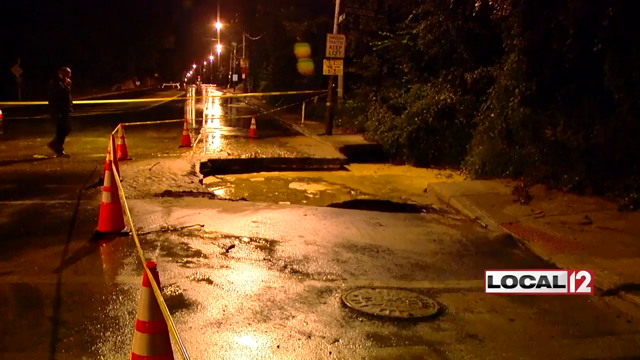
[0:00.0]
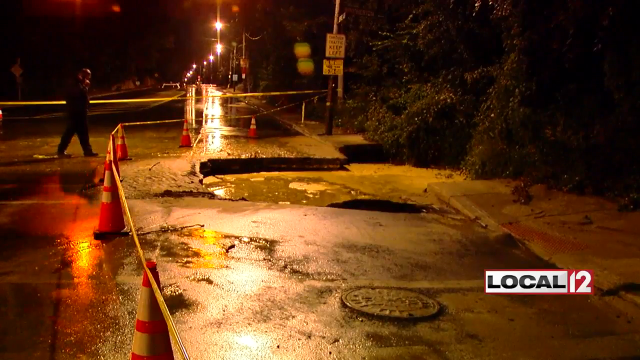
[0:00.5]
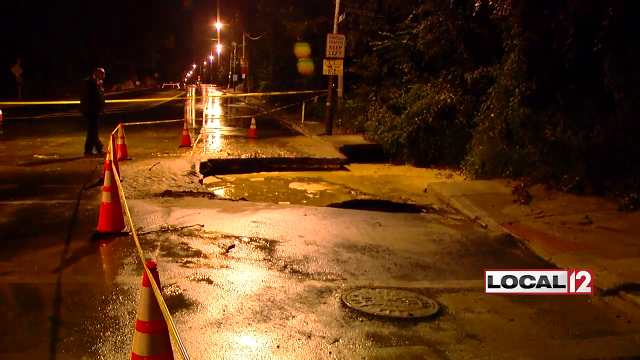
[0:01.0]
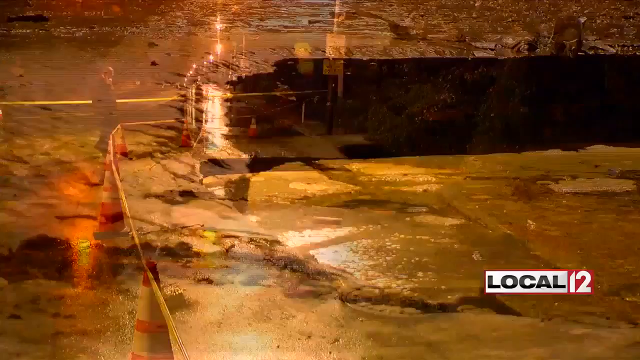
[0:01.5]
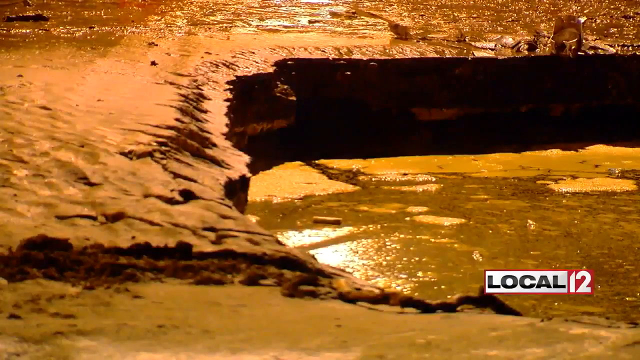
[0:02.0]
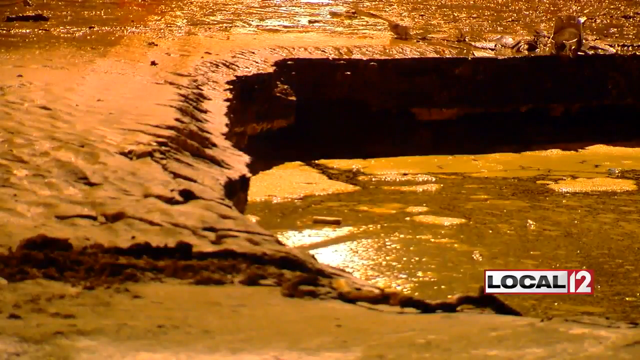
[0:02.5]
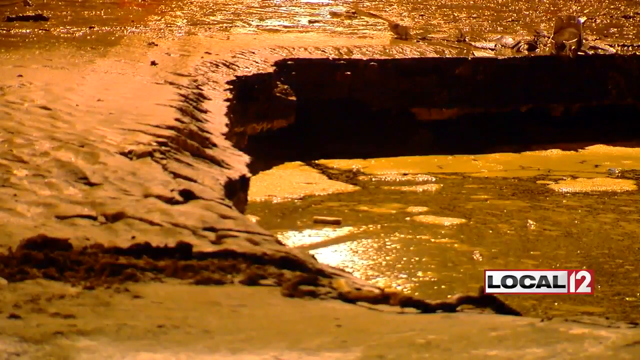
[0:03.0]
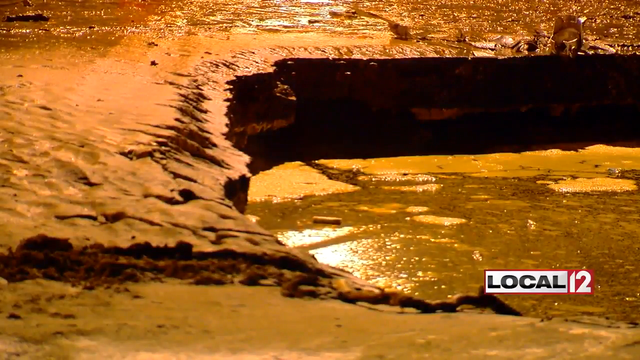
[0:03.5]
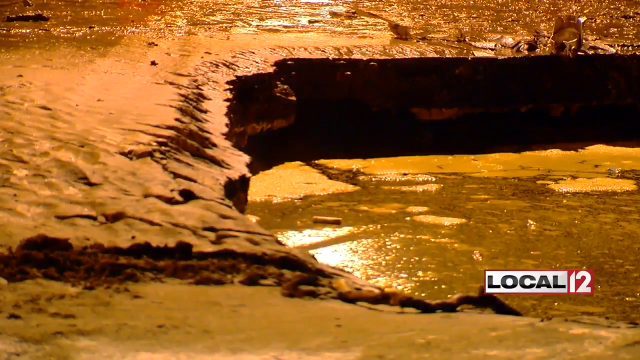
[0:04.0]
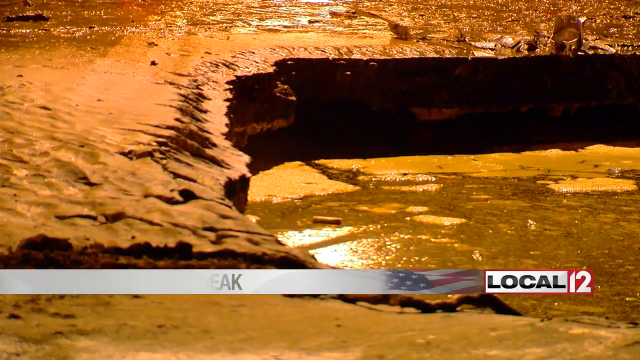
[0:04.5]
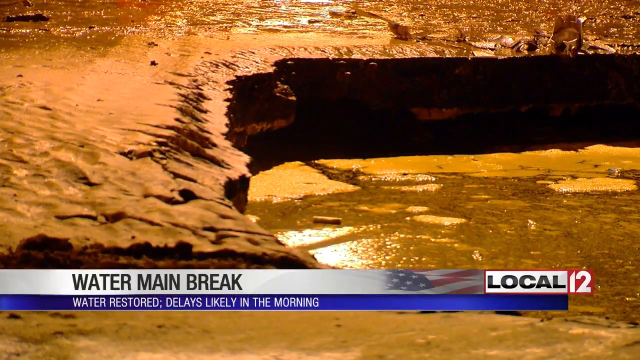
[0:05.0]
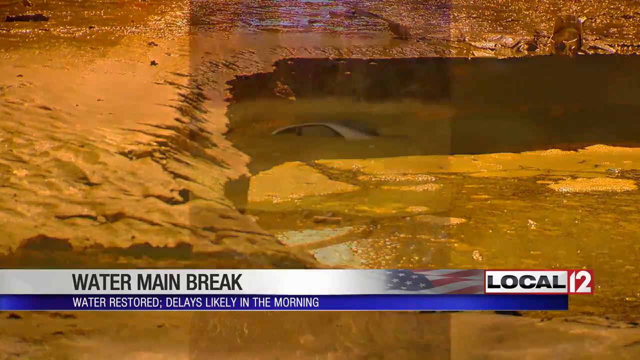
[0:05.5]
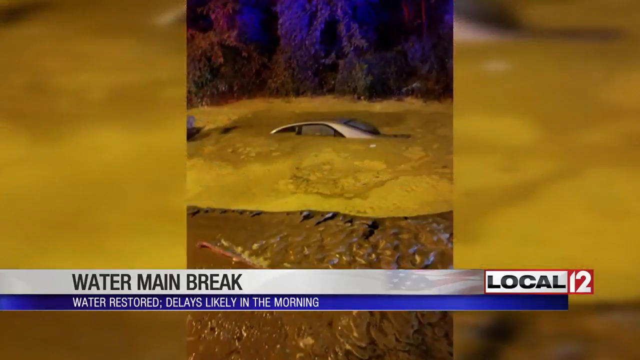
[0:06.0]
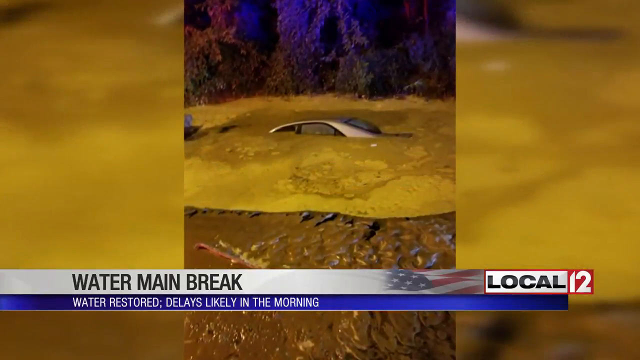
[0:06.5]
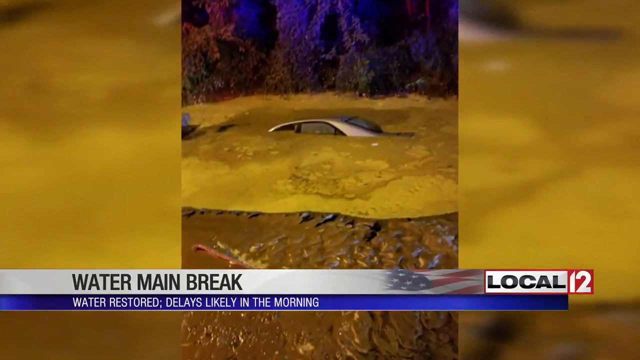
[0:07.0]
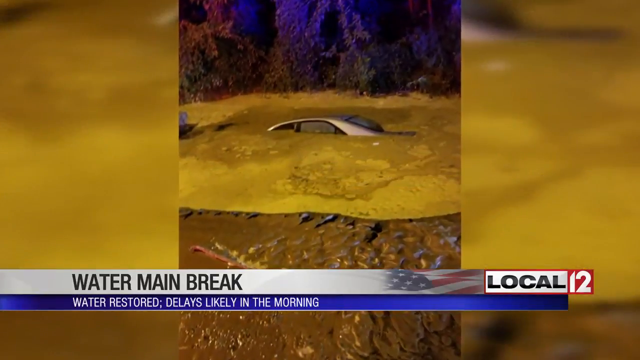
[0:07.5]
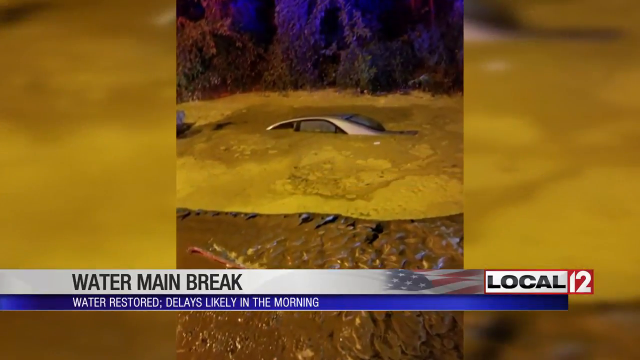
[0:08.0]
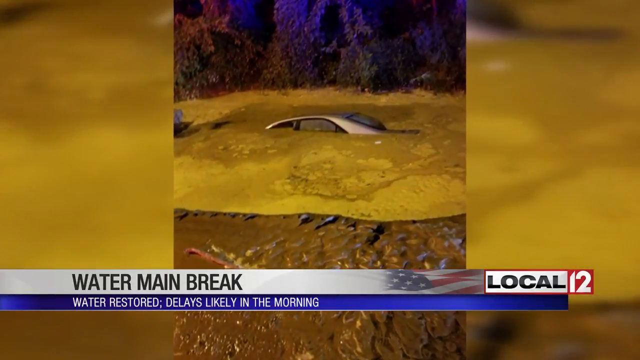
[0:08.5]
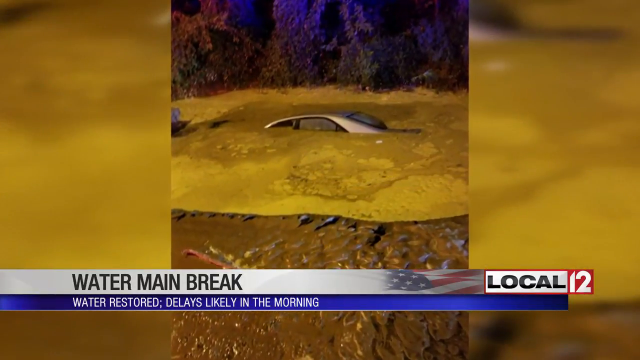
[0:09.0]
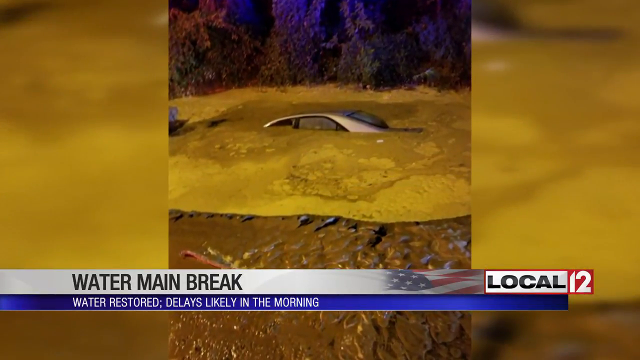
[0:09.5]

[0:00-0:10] The video opens on an outdoor setting where it looks like it has been raining. On the left-hand side there is a lot of shiny water on the ground. Towards the back of the central section, streetlights are lined up. In the top left, a man is stood up; he is wearing all black and seems to be holding a phone to his ear with his right hand. Next comes a scene where water is congregating on the right-hand side of the screen, flowing towards the bottom right corner. A banner pops up along the bottom of the screen, running from the left side to the right, reading "Water main breaks" and "delays likely in the morning". An image shows a car completely sunken under the water except for the very top of its roof.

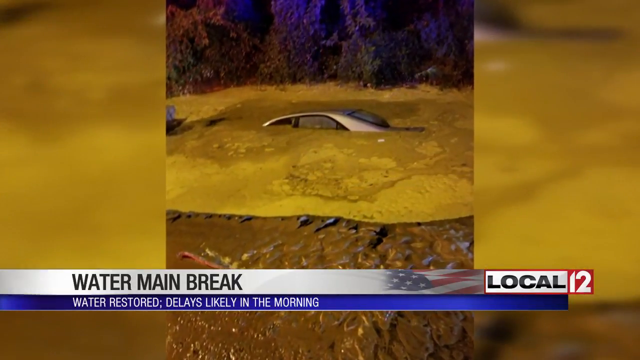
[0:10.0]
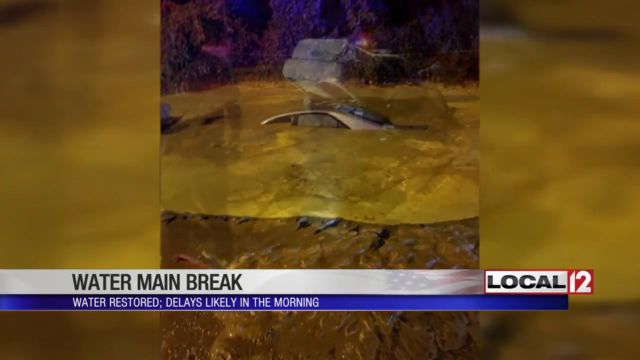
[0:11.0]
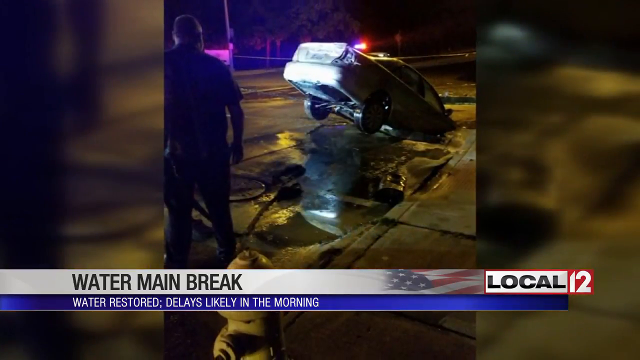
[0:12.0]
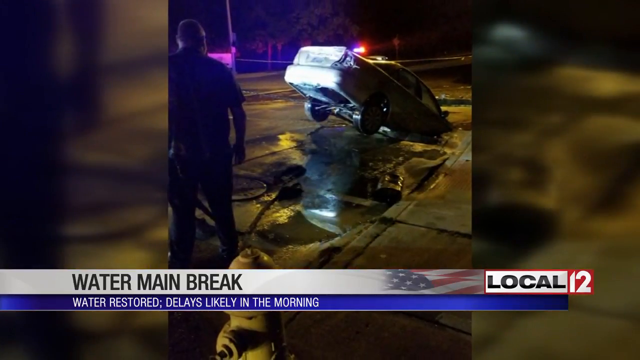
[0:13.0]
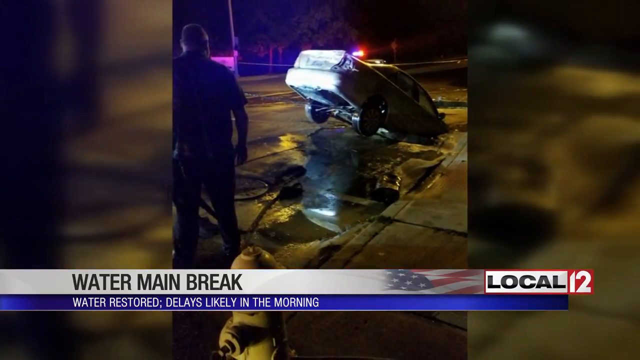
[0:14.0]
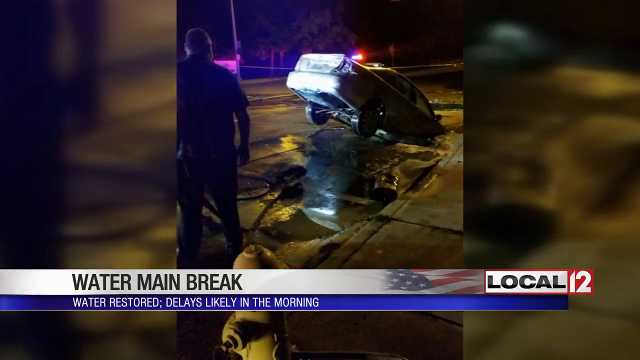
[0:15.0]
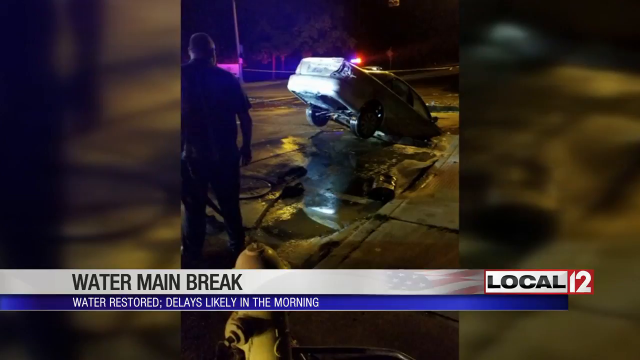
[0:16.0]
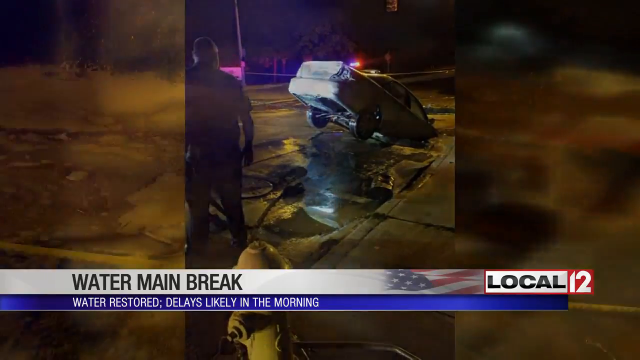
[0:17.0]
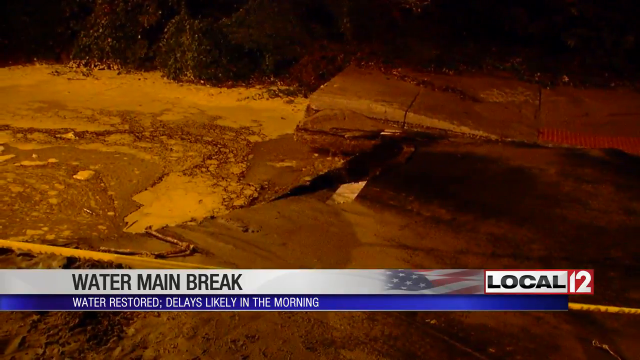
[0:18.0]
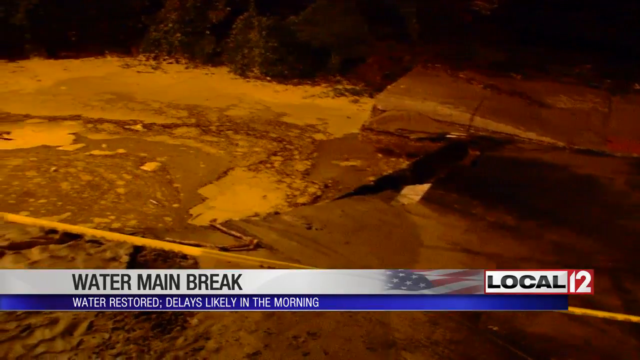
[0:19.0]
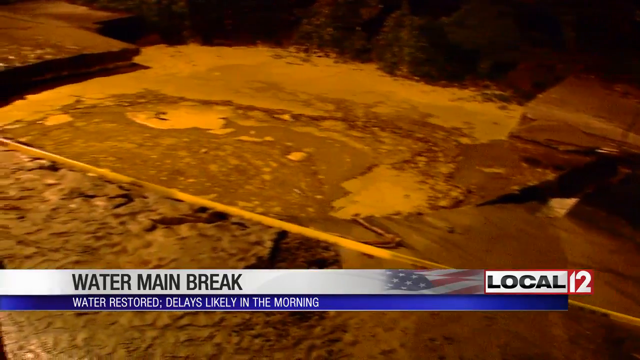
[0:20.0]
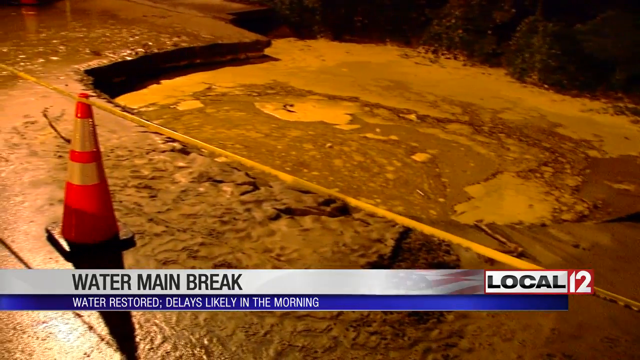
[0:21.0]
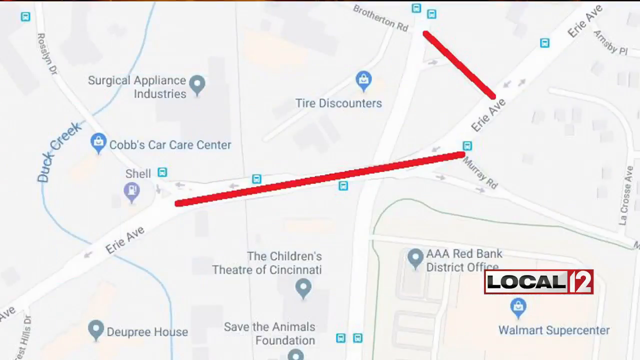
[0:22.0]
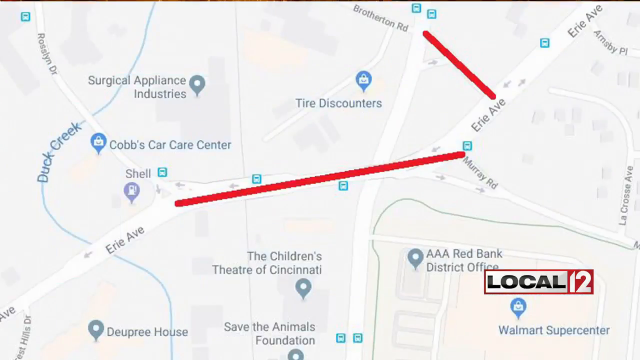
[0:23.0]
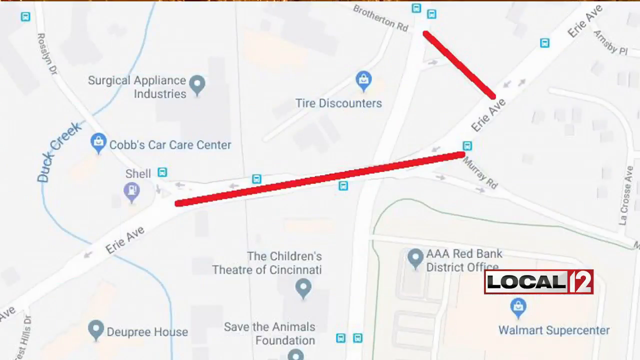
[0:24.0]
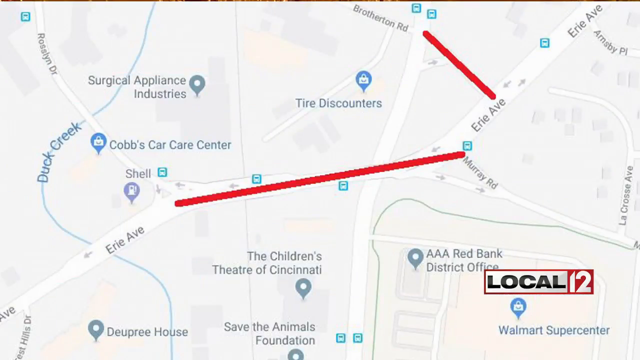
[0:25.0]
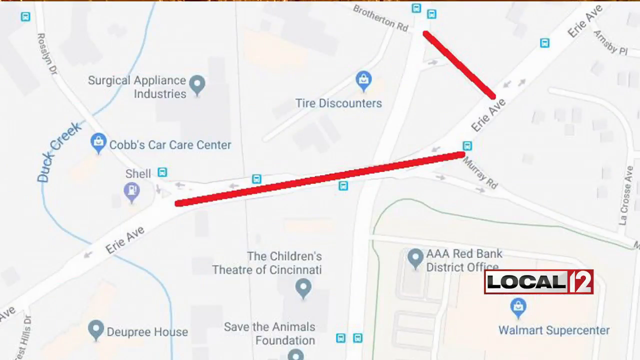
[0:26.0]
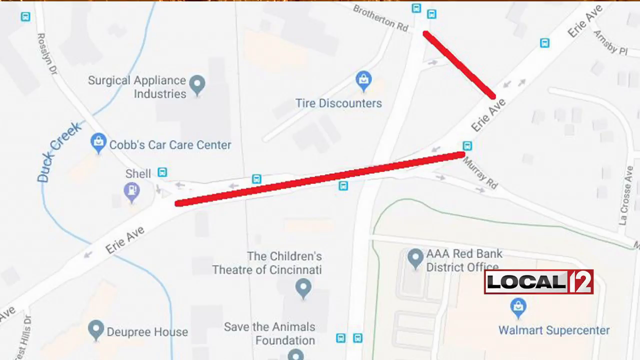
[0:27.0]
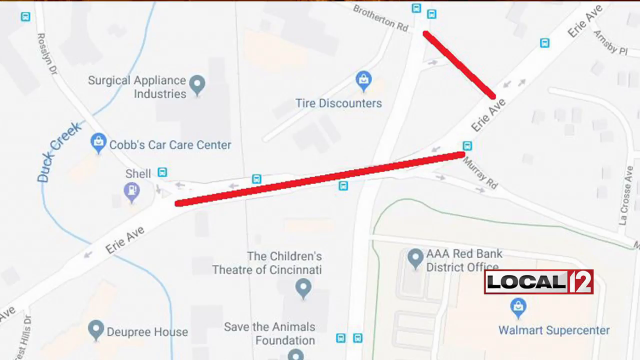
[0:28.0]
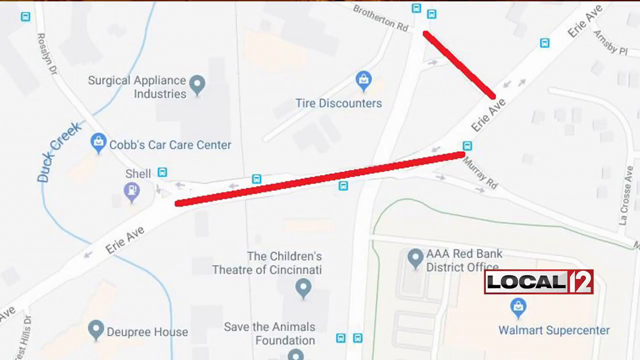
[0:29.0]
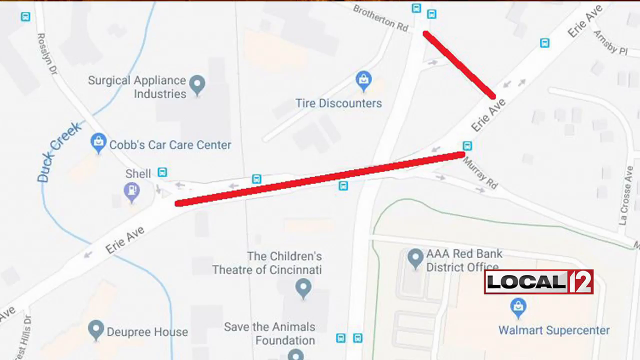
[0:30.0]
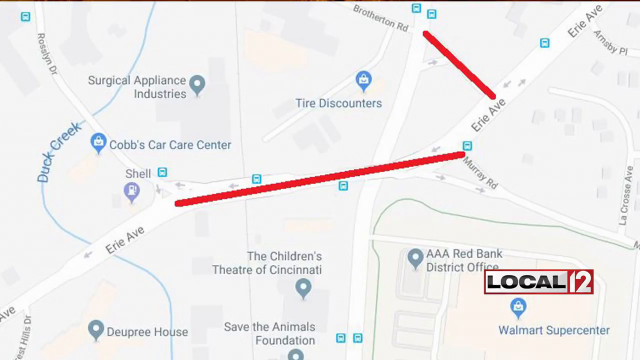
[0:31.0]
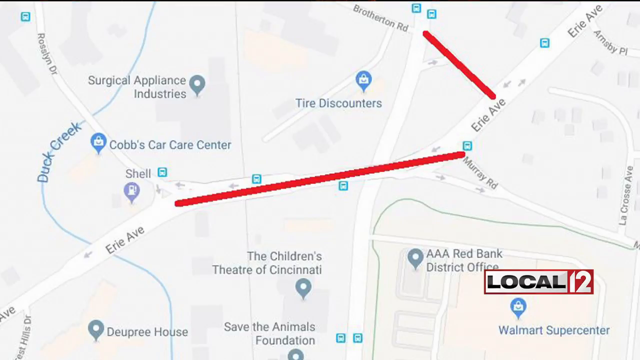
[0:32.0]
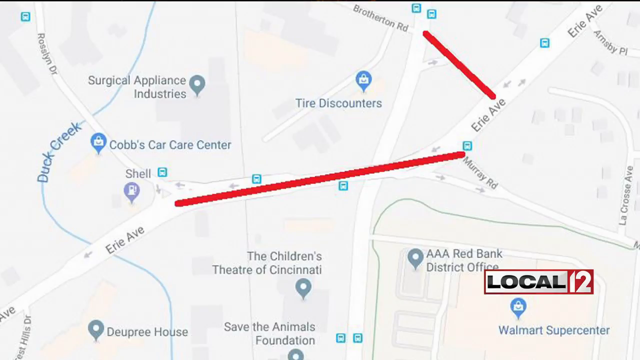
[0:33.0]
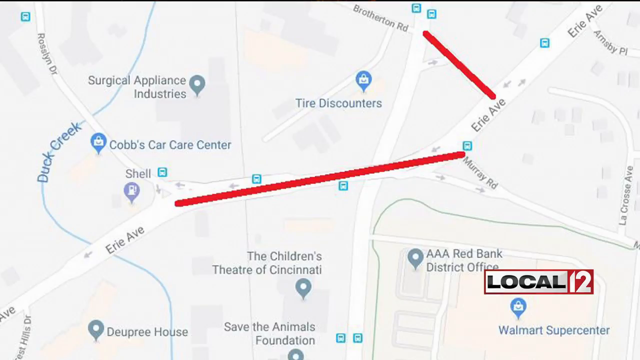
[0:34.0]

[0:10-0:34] The camera zooms in on this section. A new scene then shows a man stood on the left-hand side of the screen, looking towards the upper right corner, where a car is on its way down into the water; it is tilted, and only its two back wheels are visible. The camera zooms out and then zooms back in, showing a map with red lines on it and no key explaining what the lines are. One red line is in the top right corner of the screen, going upwards towards the centre. The second is in the right-hand middle section, going down towards the bottom left corner, with a street called erie ave directly at the bottom of that line.